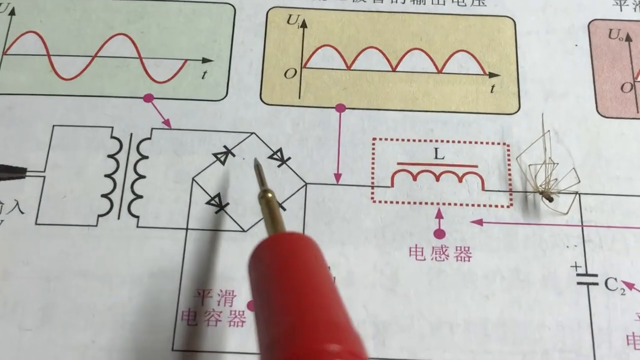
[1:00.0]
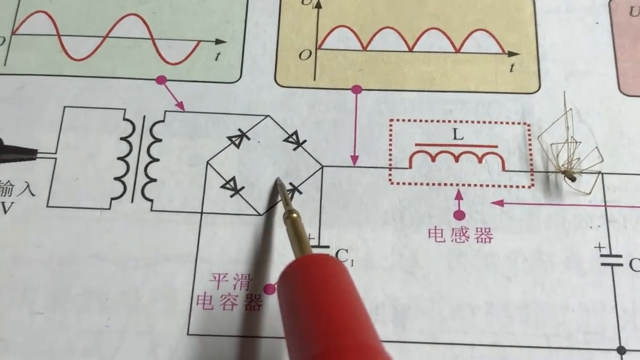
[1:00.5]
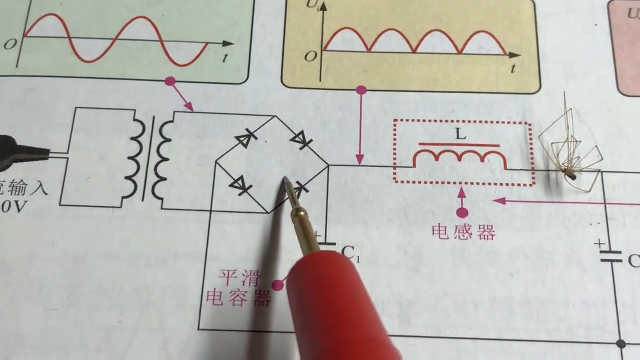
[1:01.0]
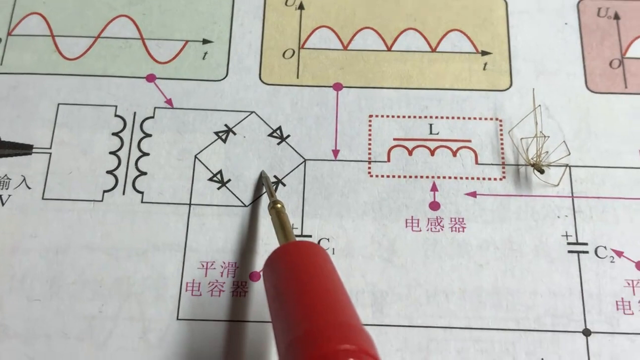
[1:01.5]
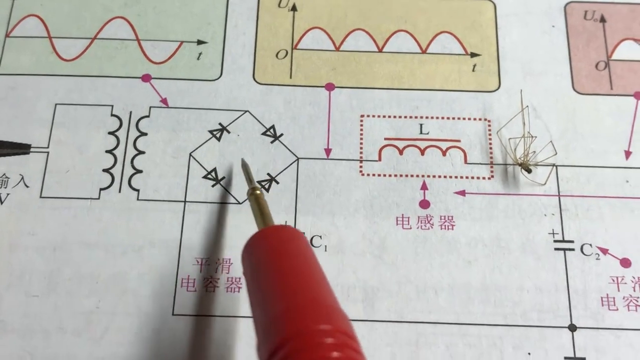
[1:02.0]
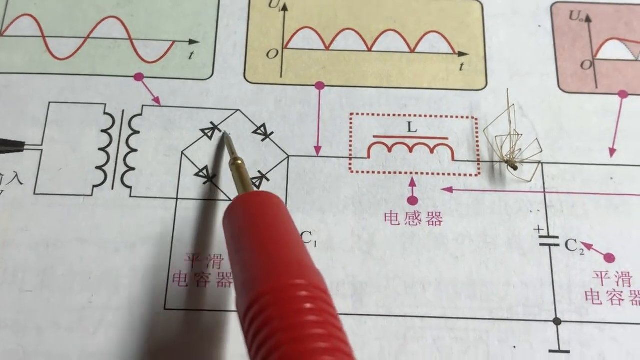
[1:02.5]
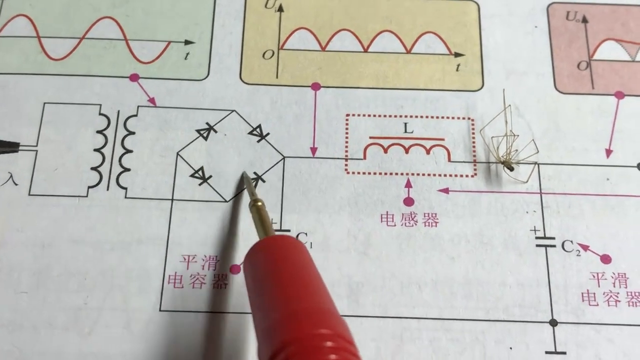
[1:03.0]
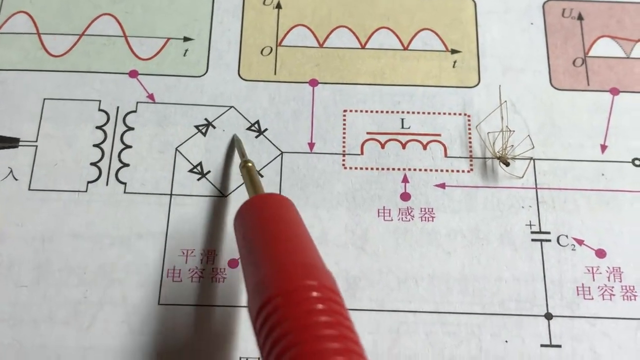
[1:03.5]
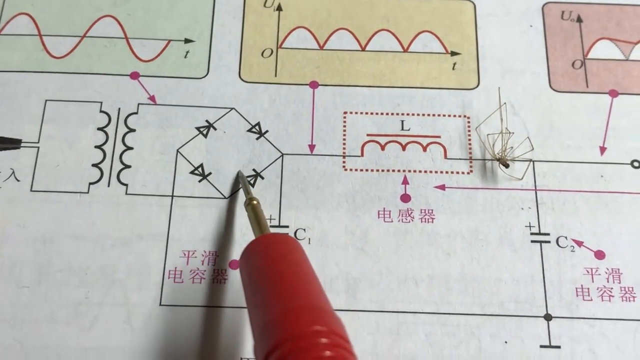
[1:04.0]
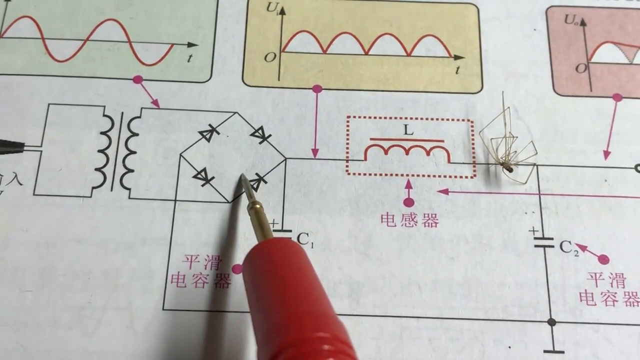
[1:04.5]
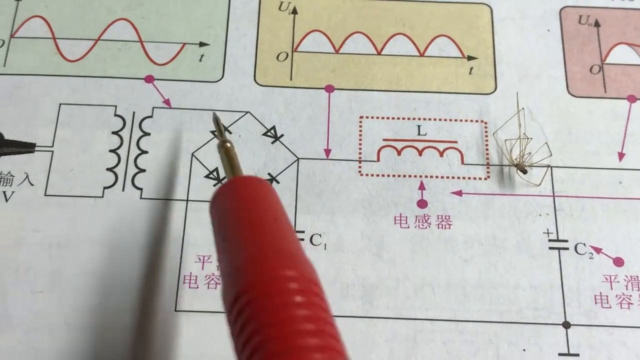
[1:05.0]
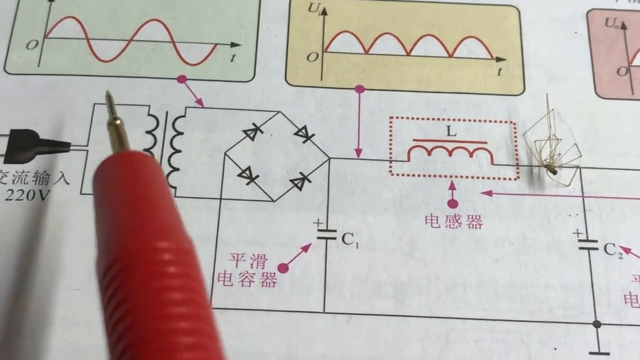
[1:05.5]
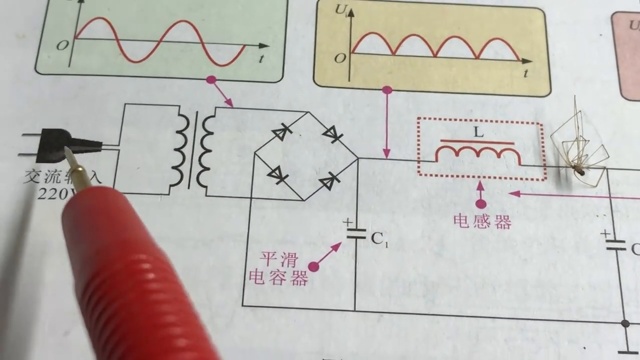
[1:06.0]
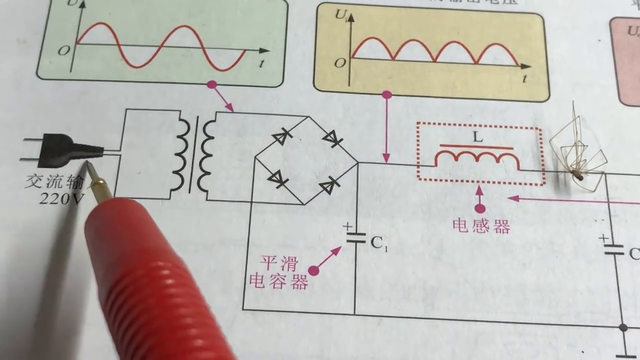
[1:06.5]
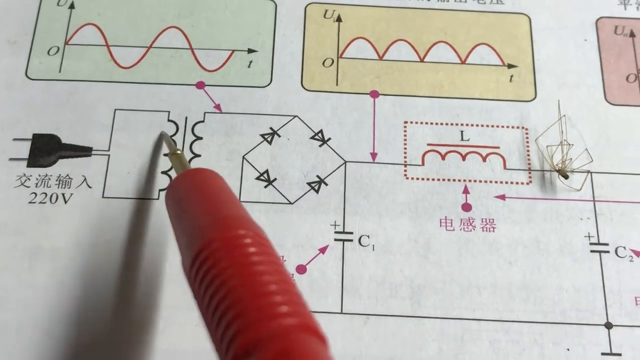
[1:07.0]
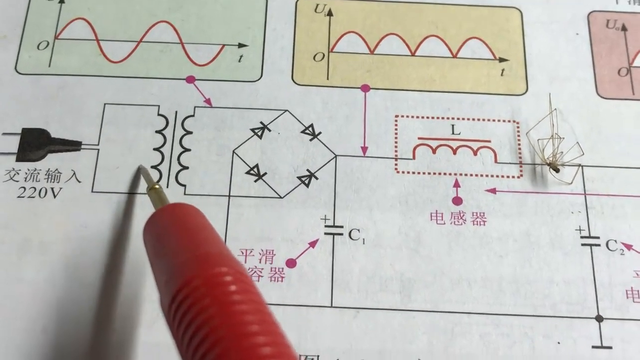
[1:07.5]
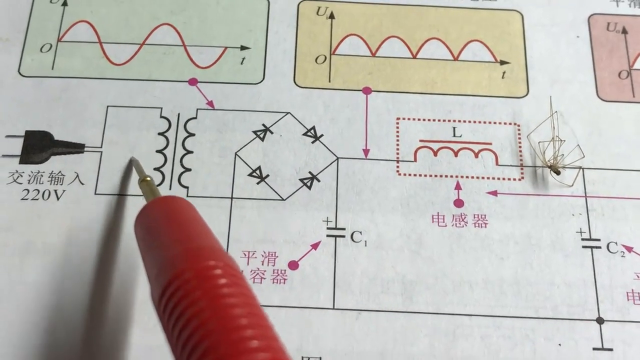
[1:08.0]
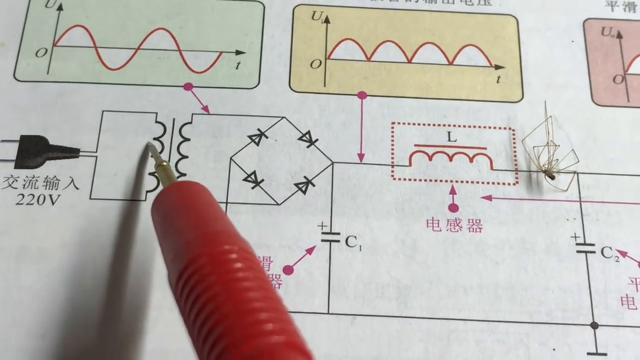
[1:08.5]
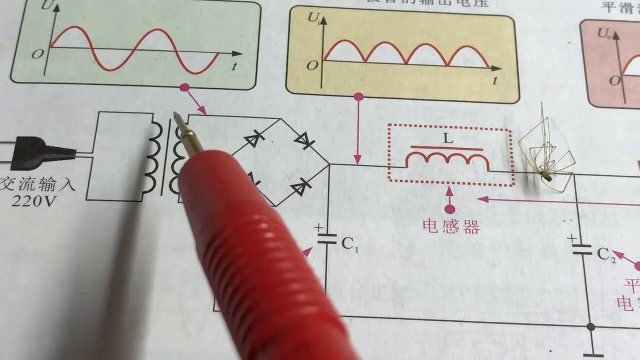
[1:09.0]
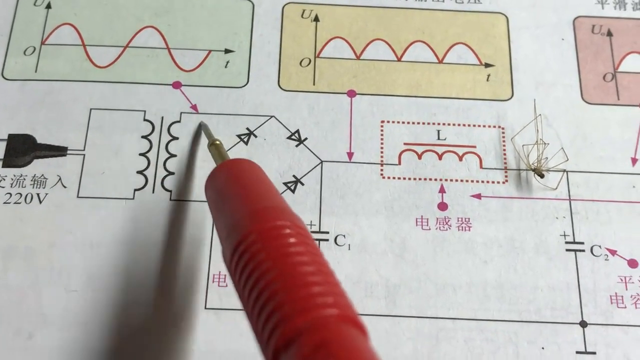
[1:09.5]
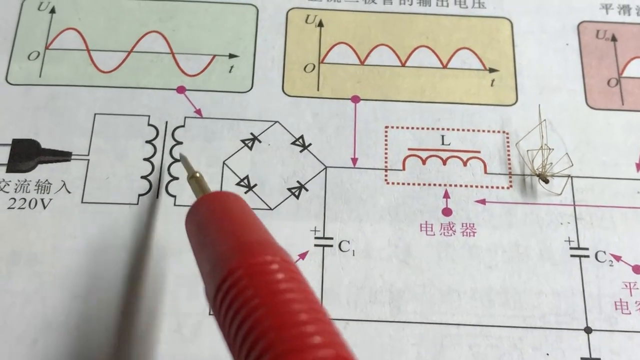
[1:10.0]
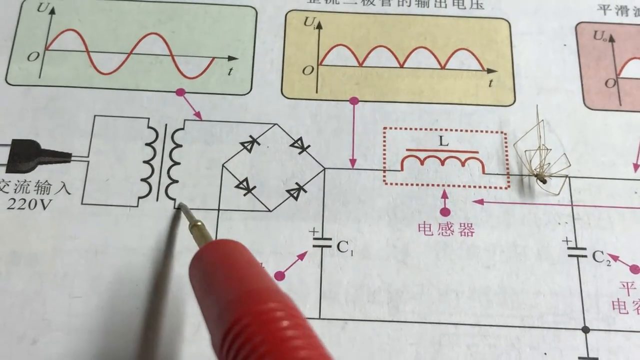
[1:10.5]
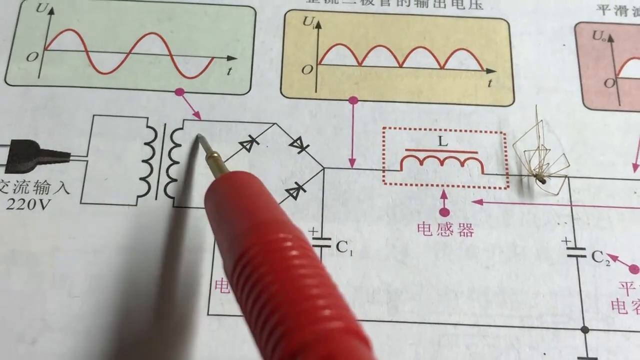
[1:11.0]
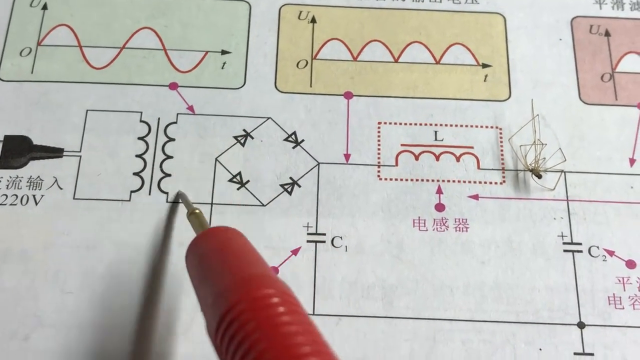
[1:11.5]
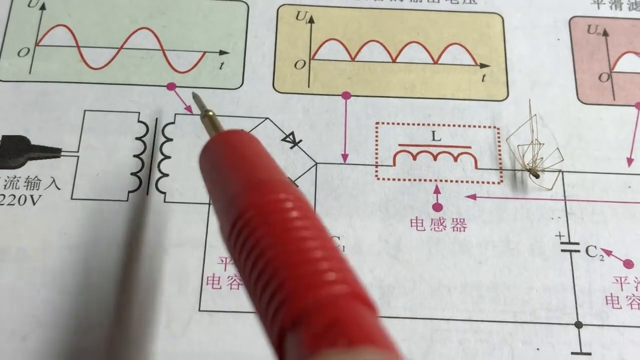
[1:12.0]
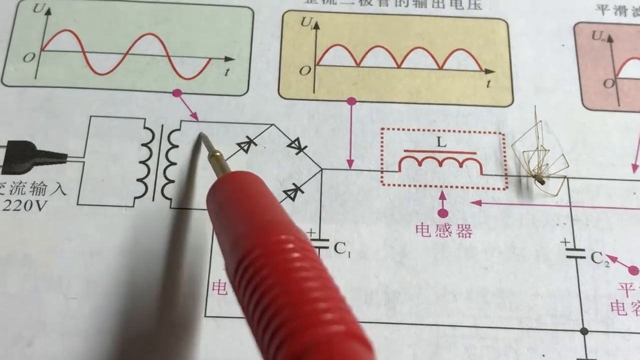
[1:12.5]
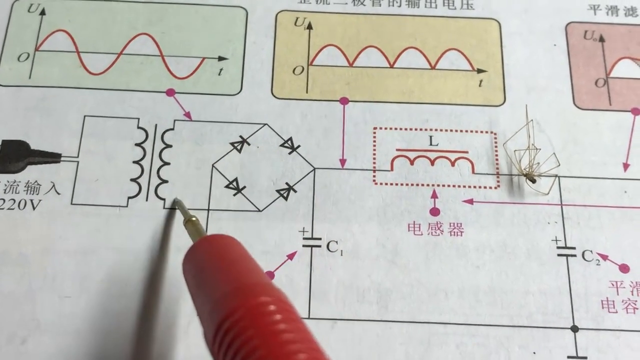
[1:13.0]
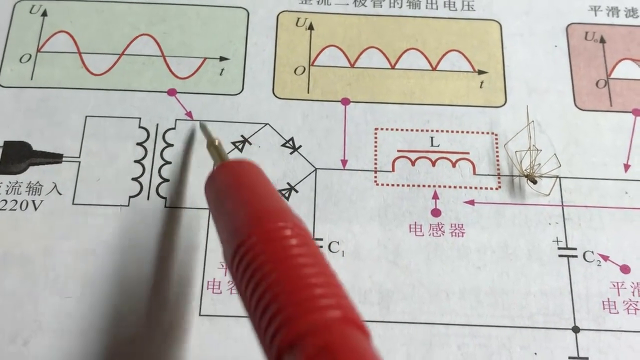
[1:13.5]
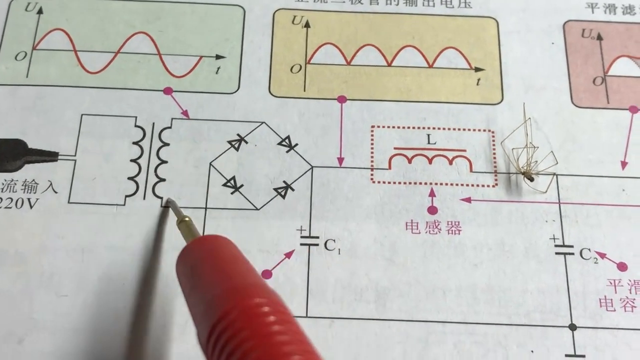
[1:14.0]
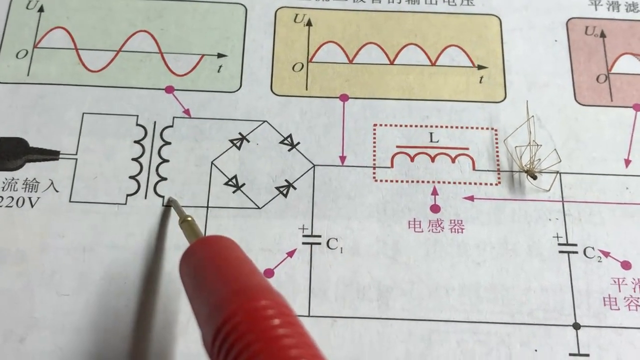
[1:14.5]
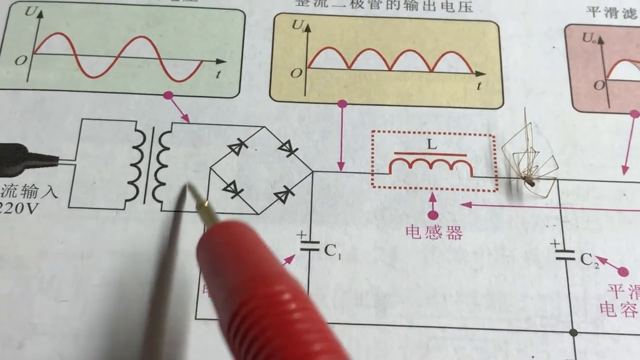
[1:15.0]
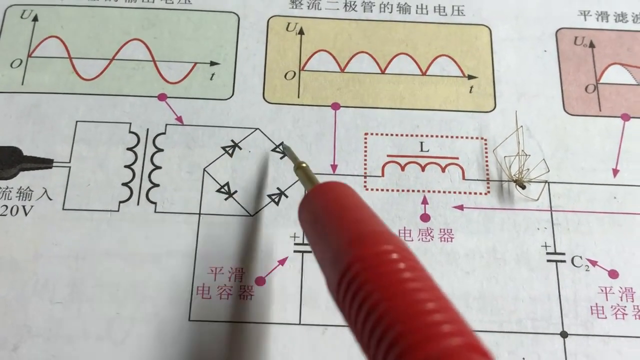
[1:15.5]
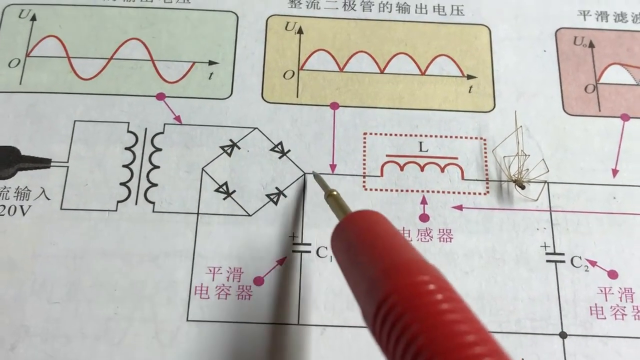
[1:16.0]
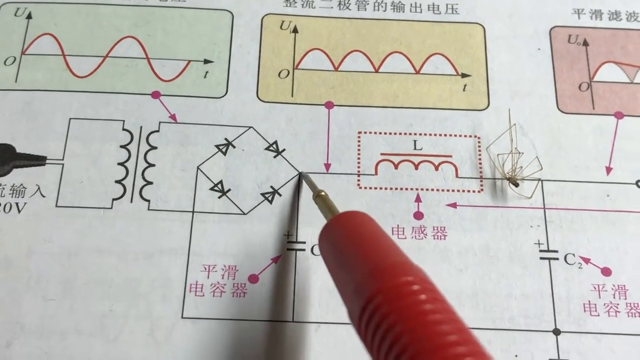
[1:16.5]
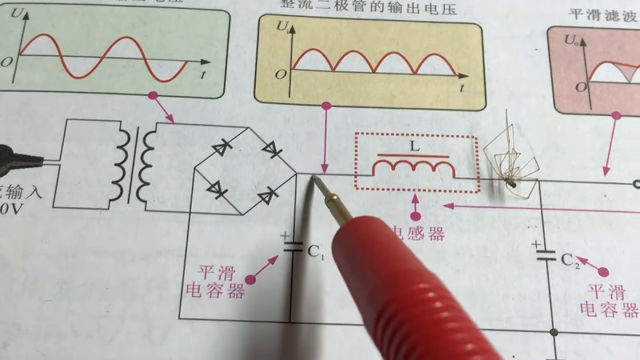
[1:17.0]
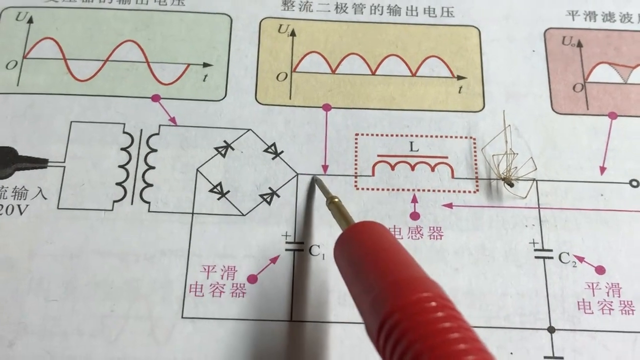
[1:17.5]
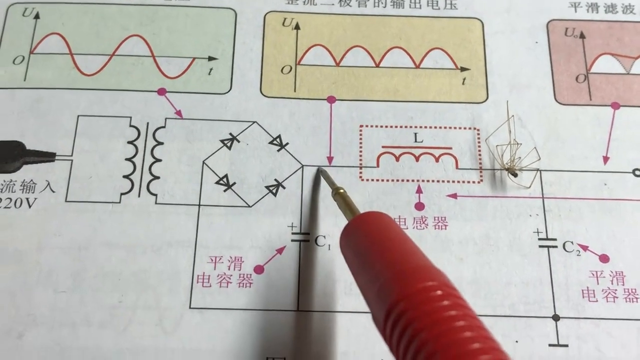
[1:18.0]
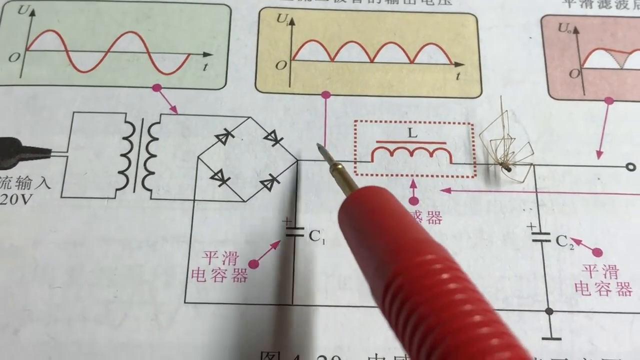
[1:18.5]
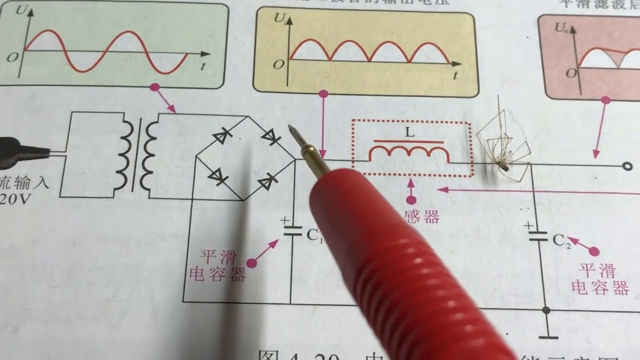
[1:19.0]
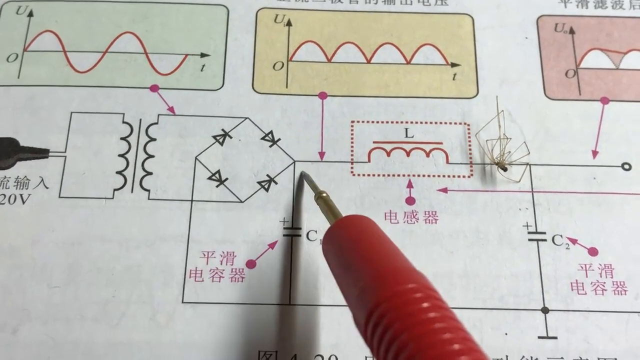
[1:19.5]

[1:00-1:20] A little golden pointer with a red sort of base points to a part of a diagram or schematic: a diamond shape with black triangles on each side and a black line attached to the tip. The pointer makes a circle inside that shape. It then moves to the left to another piece of the diagram attached to that piece, an illustration of a black plug with kanji characters below it and "220V" below those. The pointer moves back and forth between these two points on the diagram, connecting the two pieces, and then moves further to the right of the diamond shape.